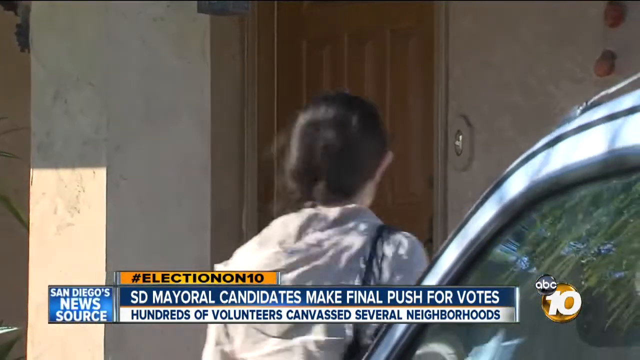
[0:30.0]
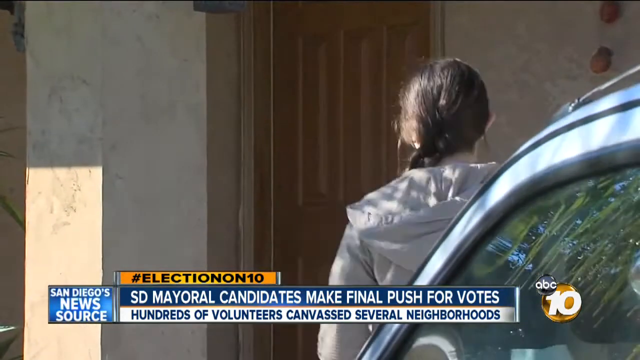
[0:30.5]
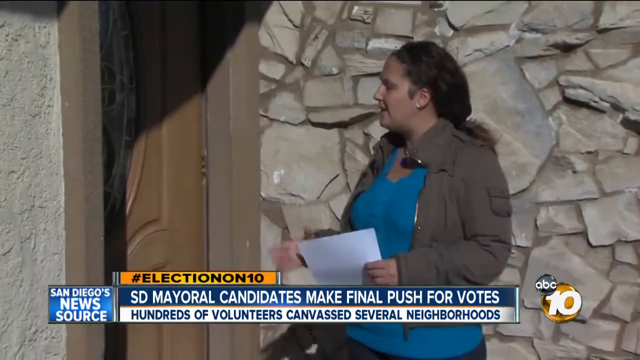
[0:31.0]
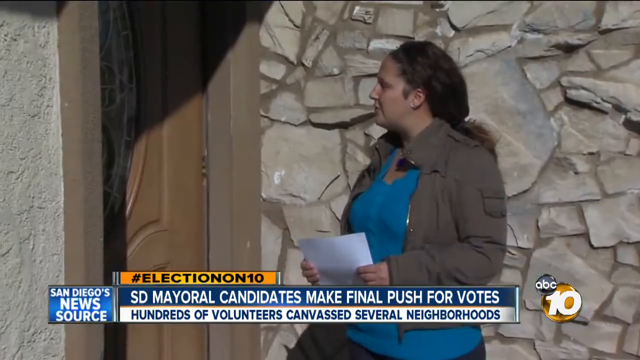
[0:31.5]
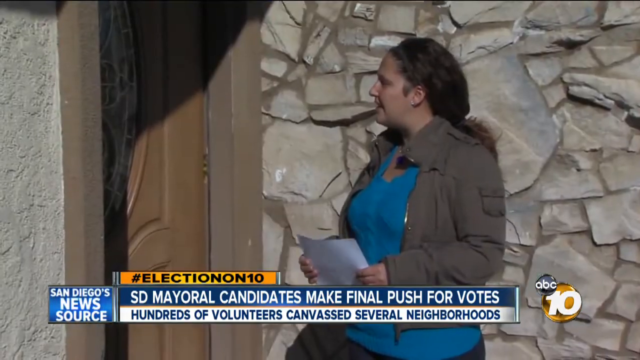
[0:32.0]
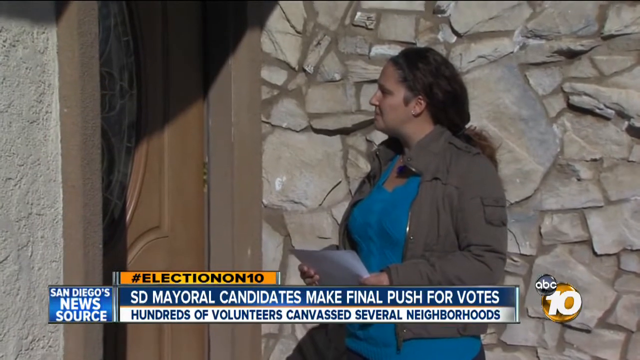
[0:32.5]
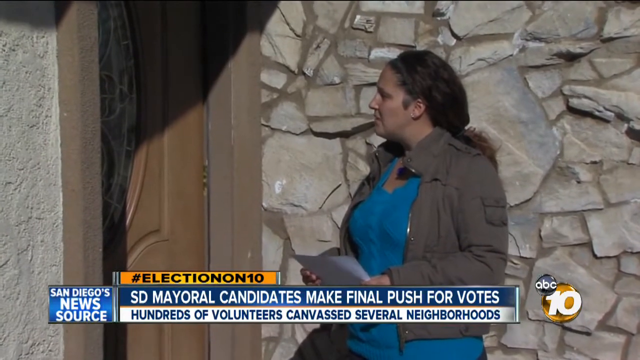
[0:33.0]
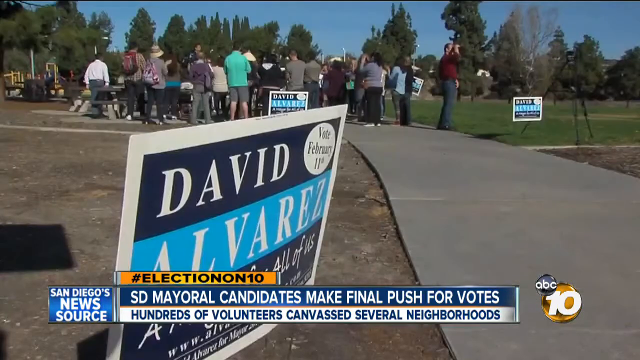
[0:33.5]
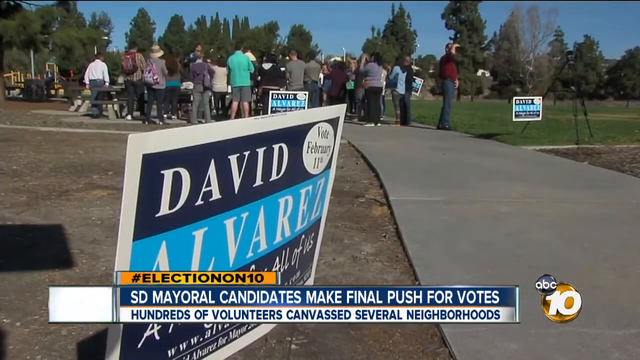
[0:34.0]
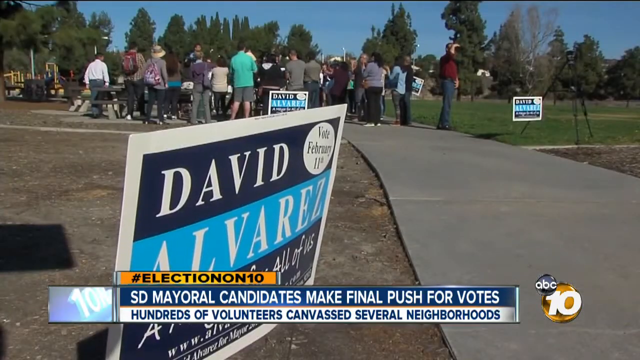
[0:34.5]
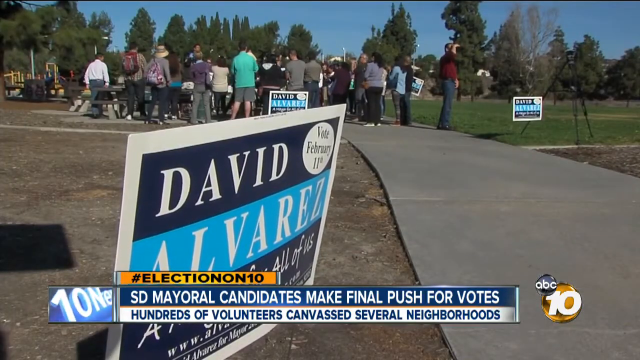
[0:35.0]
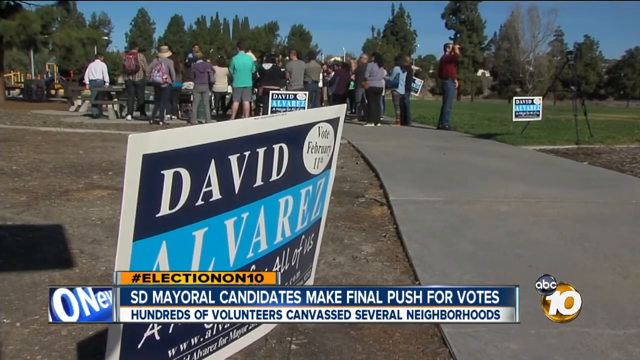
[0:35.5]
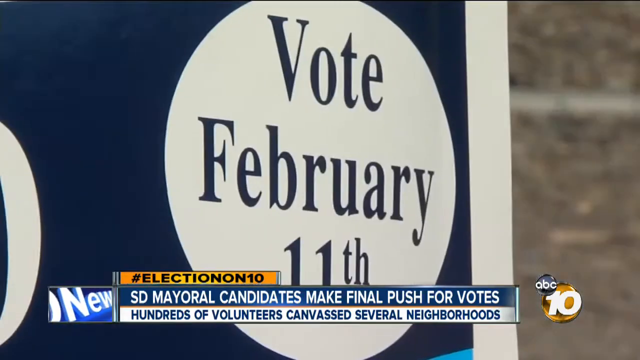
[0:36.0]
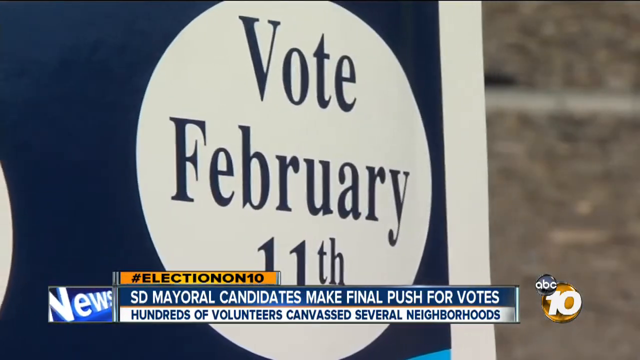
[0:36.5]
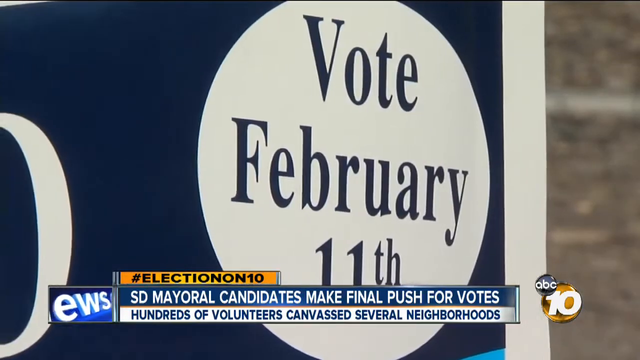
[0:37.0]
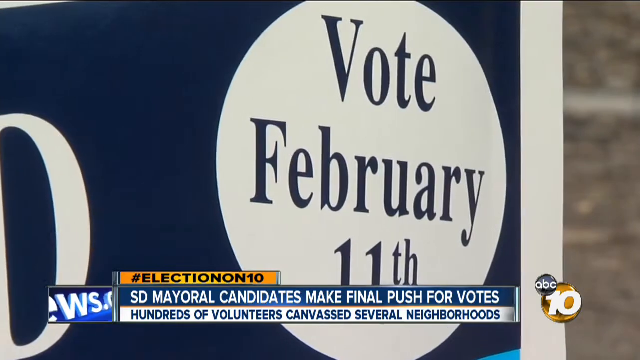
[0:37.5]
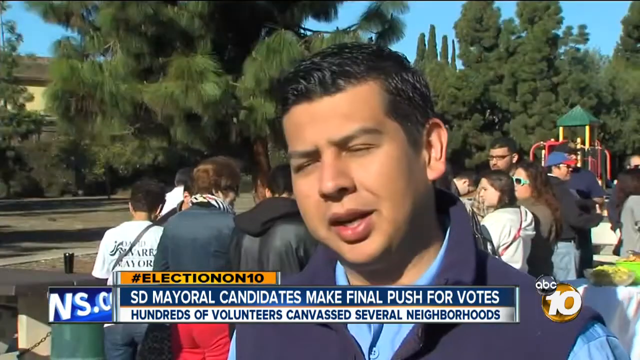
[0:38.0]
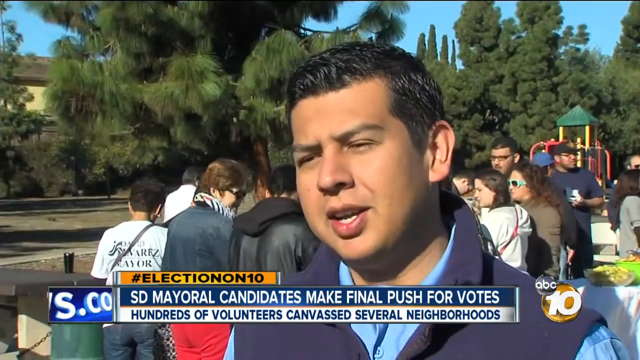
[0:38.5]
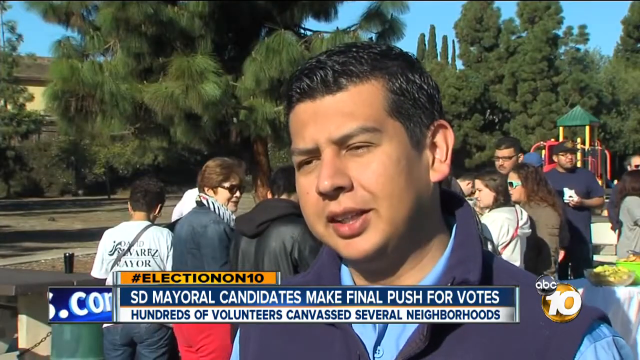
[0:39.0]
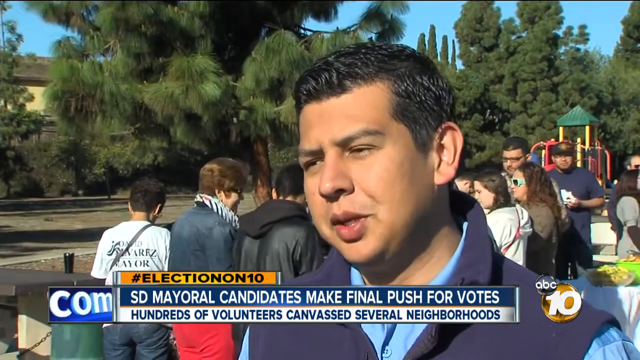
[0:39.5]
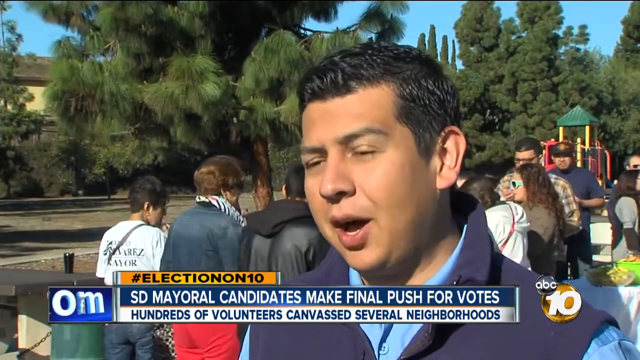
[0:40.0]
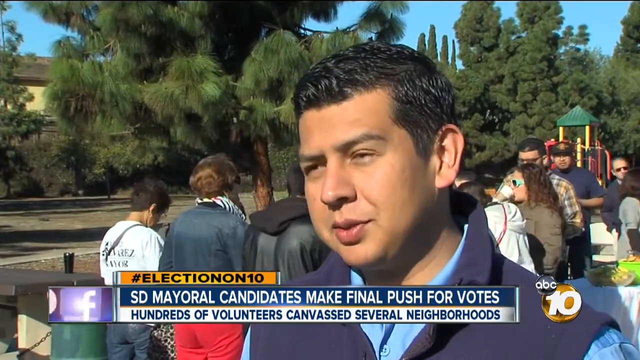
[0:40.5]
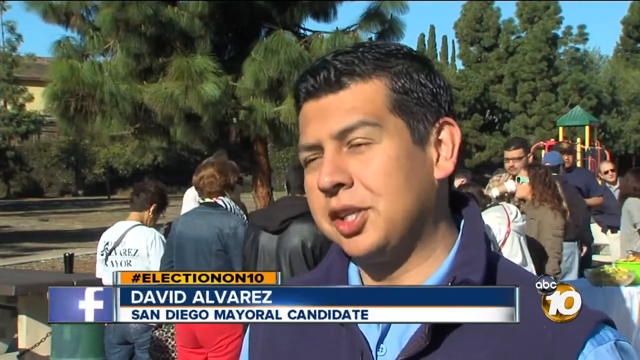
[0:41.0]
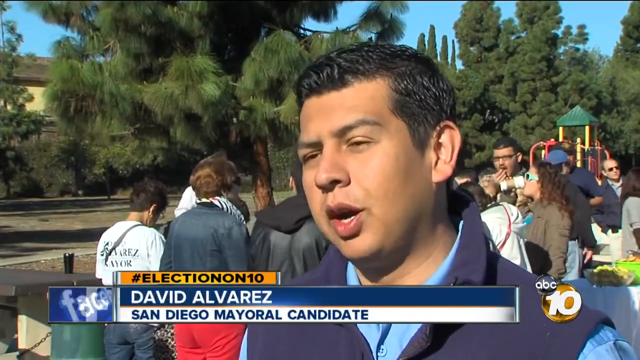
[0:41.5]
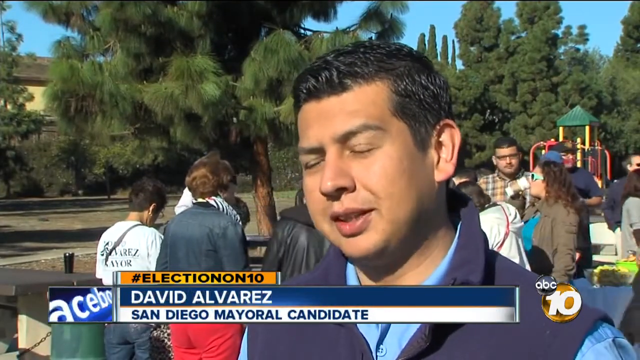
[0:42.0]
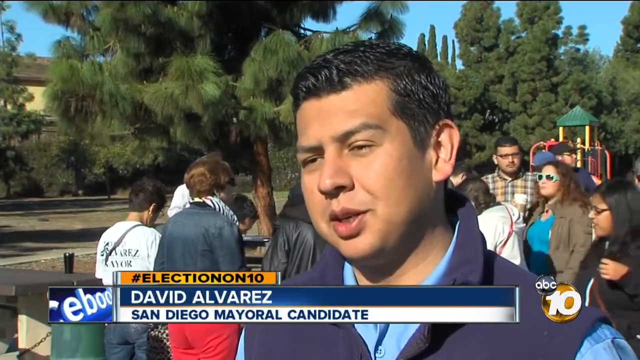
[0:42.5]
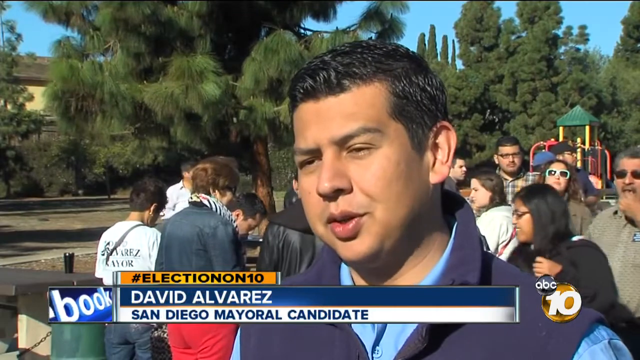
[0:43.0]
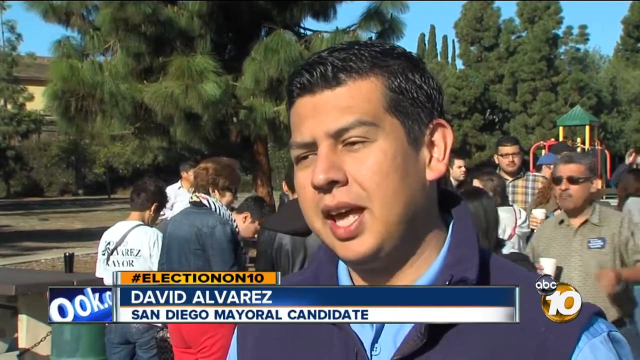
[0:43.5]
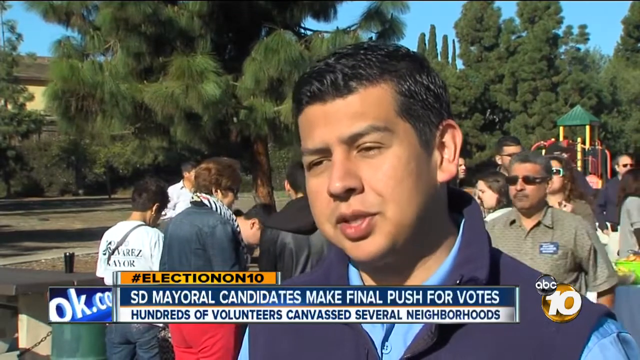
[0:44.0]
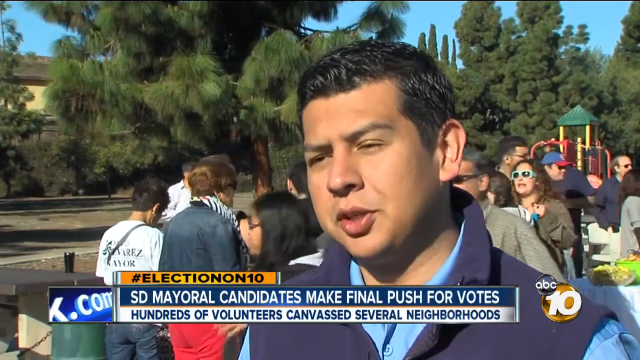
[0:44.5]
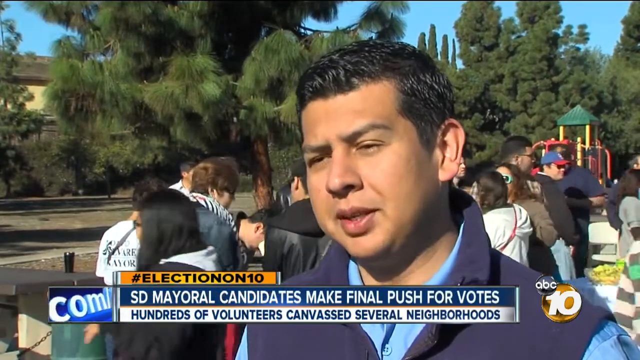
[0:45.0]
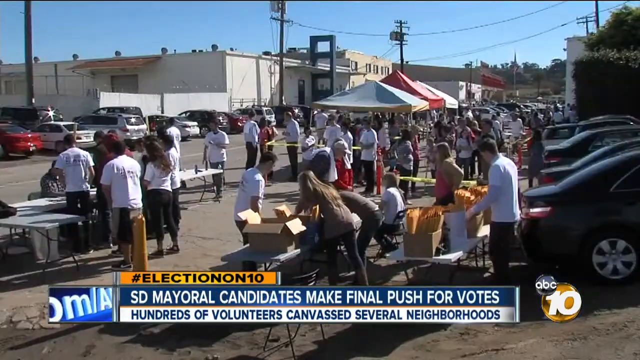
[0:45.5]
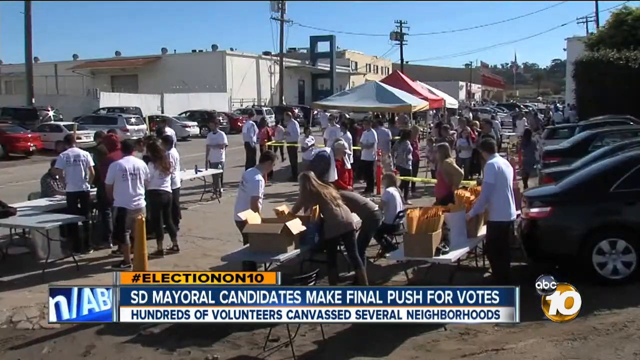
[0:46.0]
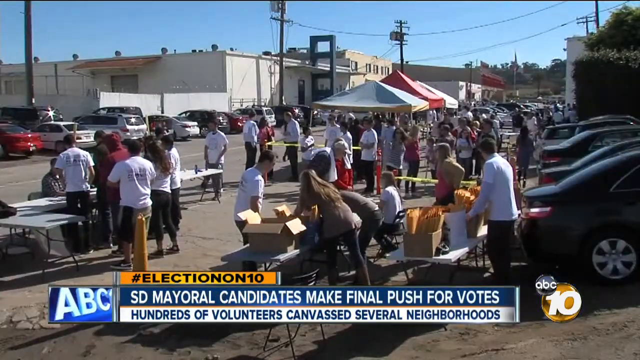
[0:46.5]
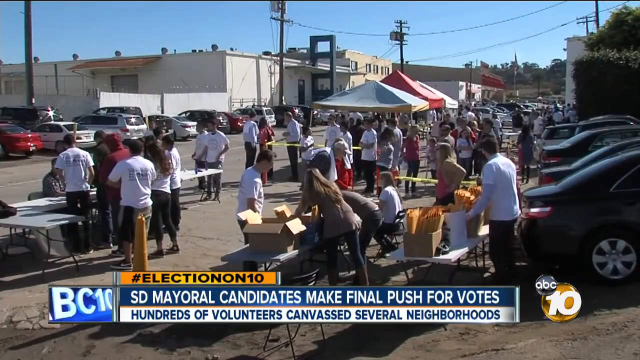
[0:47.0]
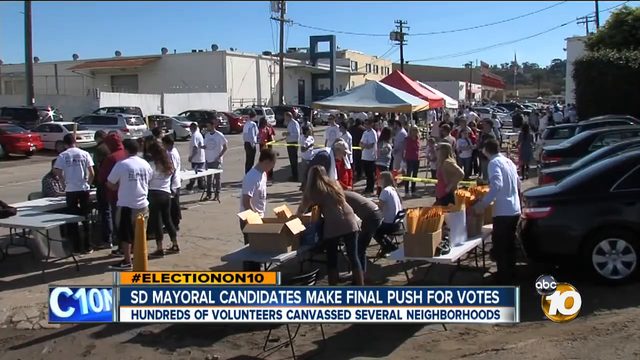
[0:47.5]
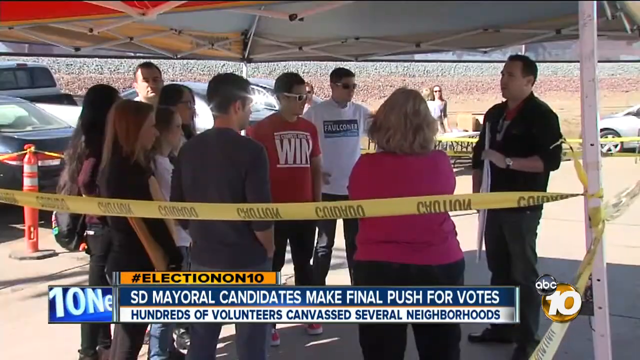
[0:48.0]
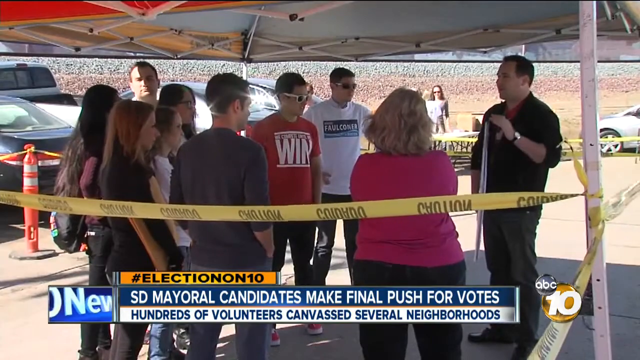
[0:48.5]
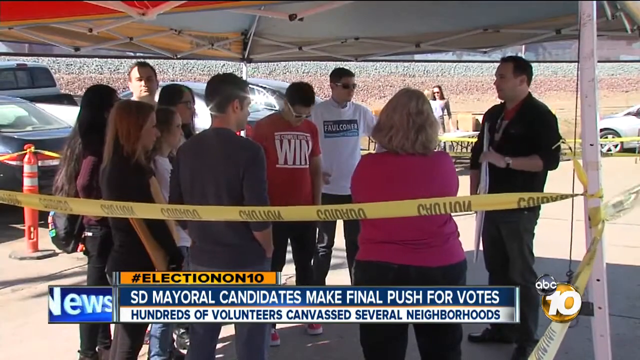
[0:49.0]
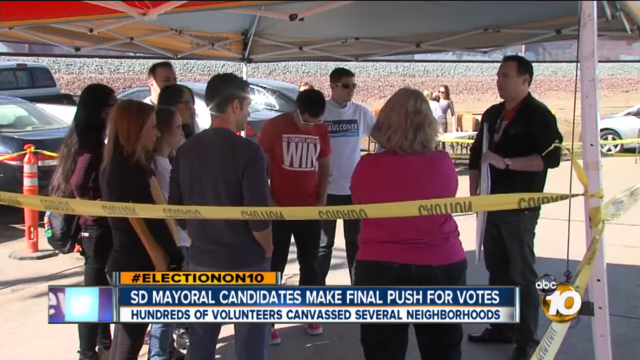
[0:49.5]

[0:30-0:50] The back of someone walking away from the camera is shown. A brown door is toward the top of the screen, and at the lower right is the top of a car, with its window visible. The door then appears on the left side of the screen, running vertically from top to bottom. There is a stone wall, and a woman stands looking at the door toward the left of the screen. She wears a green coat and a turquoise top, and her hair is tied up with a bobble. The scene then changes to an outdoor view with a pathway running from the bottom right corner toward the central upper section, where many people are standing and congregating.